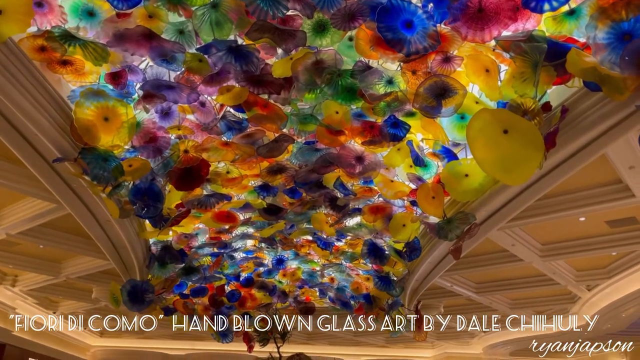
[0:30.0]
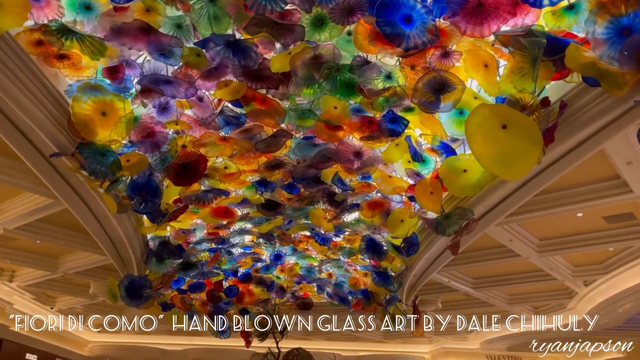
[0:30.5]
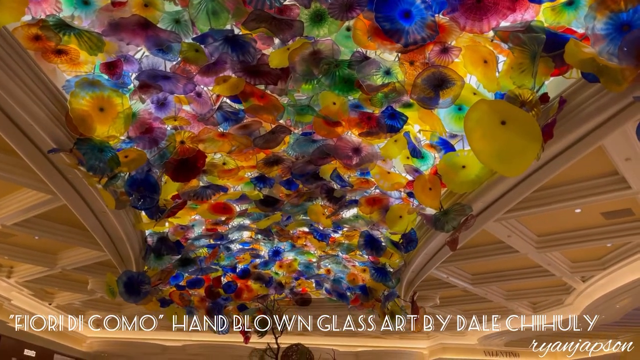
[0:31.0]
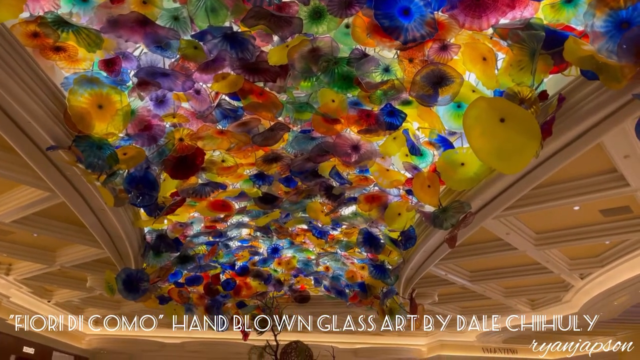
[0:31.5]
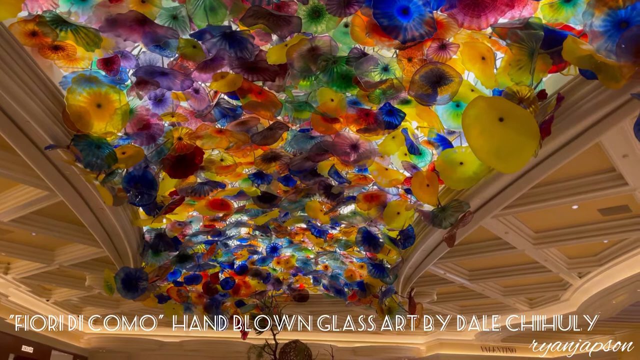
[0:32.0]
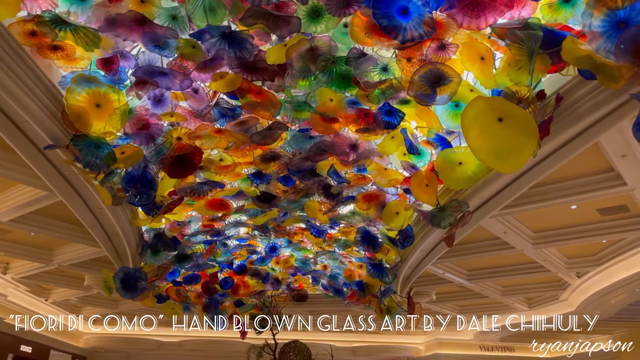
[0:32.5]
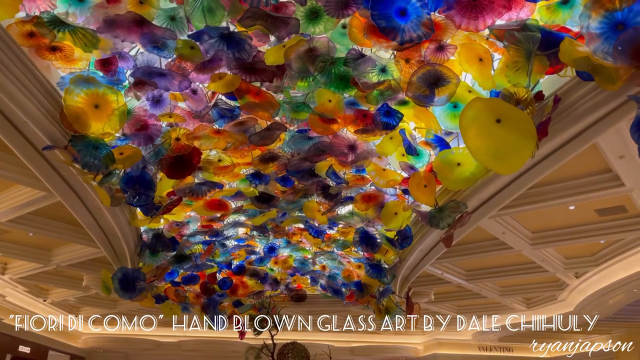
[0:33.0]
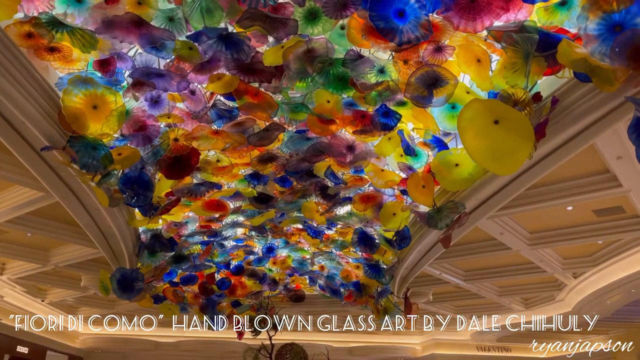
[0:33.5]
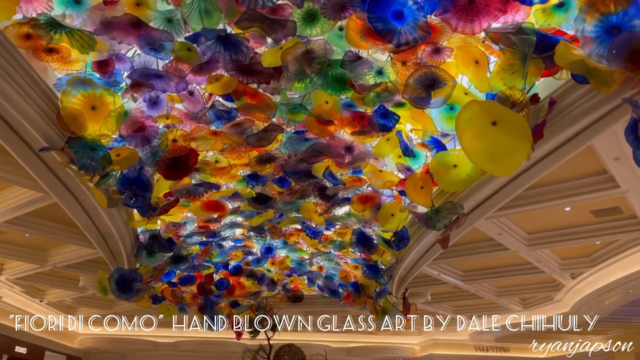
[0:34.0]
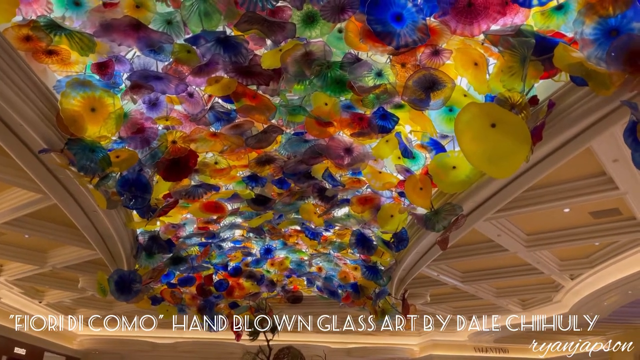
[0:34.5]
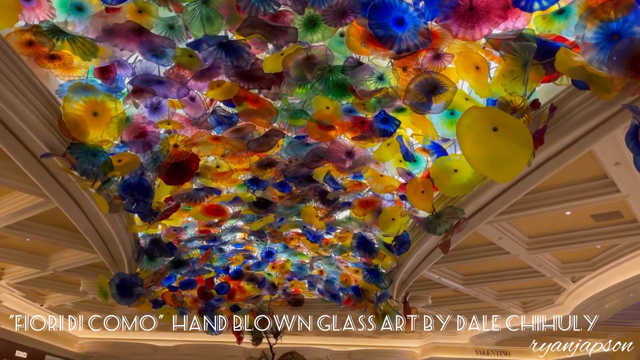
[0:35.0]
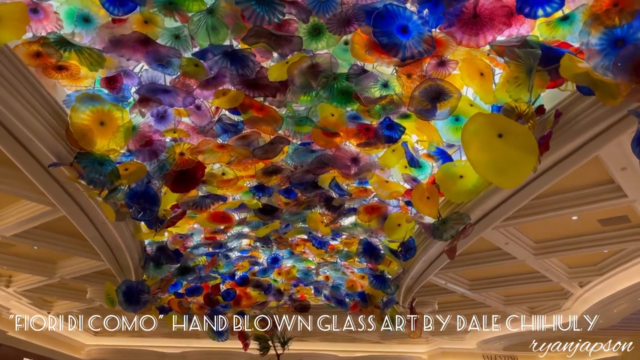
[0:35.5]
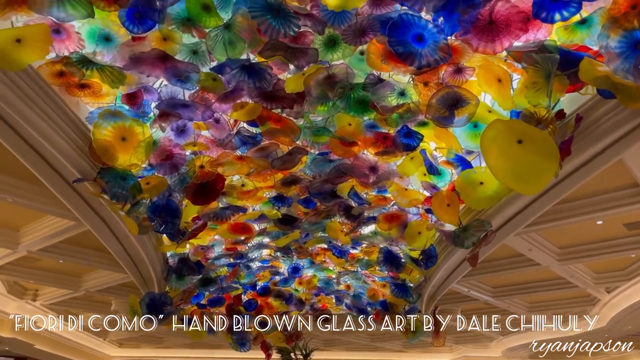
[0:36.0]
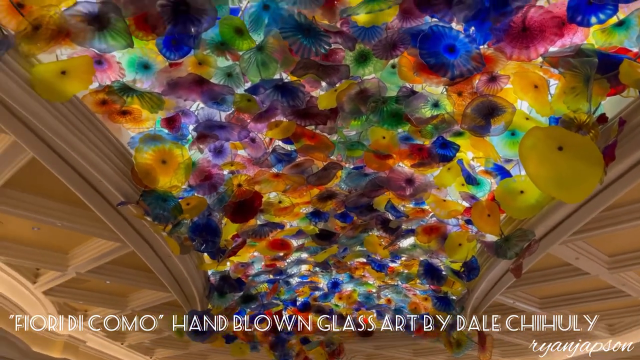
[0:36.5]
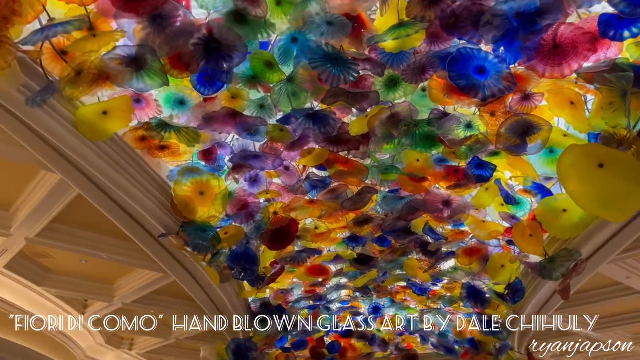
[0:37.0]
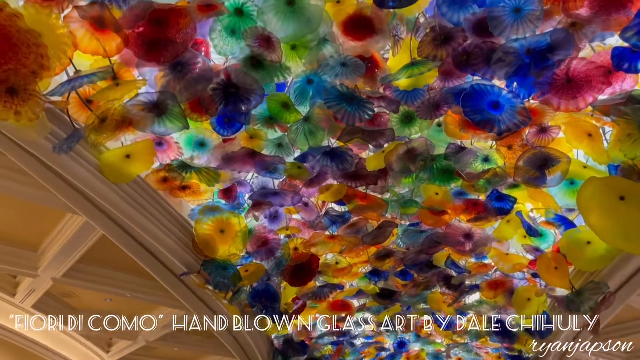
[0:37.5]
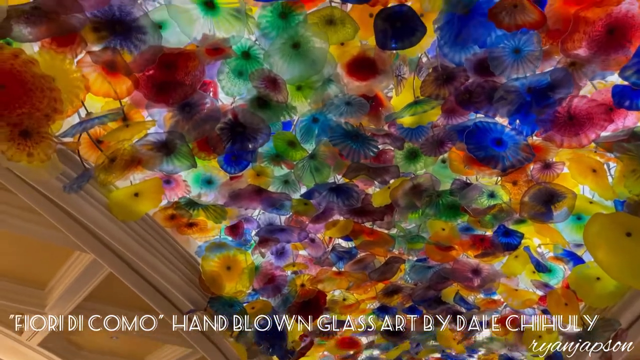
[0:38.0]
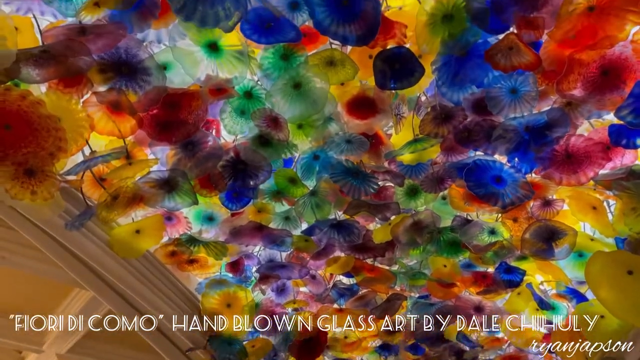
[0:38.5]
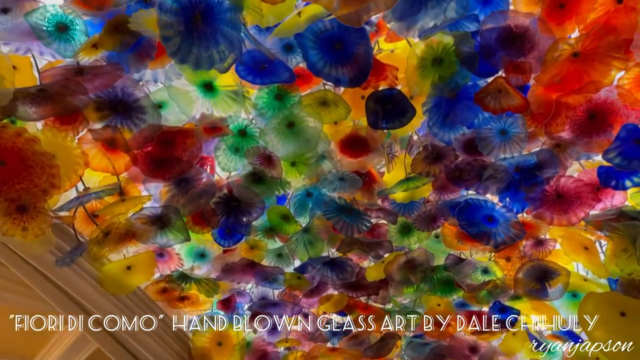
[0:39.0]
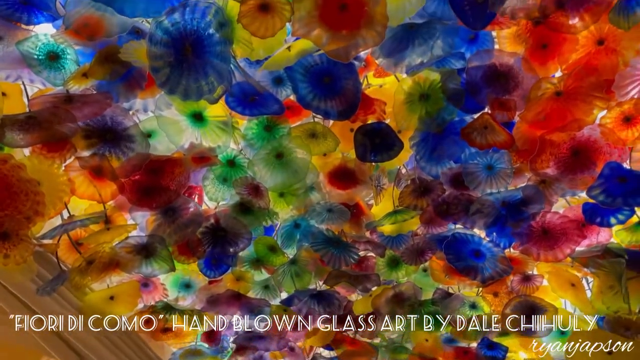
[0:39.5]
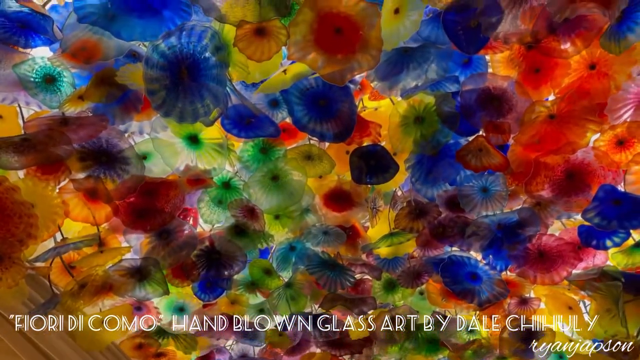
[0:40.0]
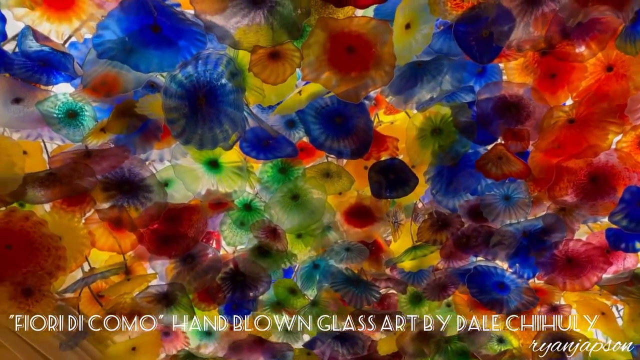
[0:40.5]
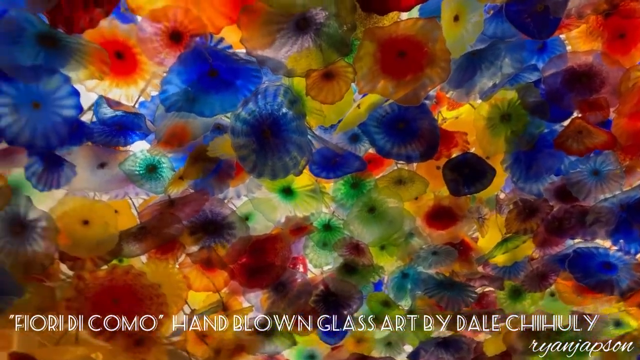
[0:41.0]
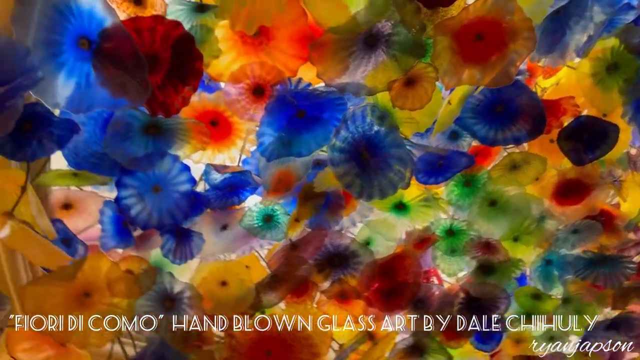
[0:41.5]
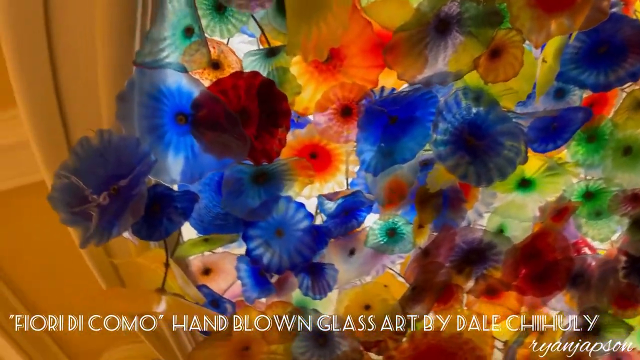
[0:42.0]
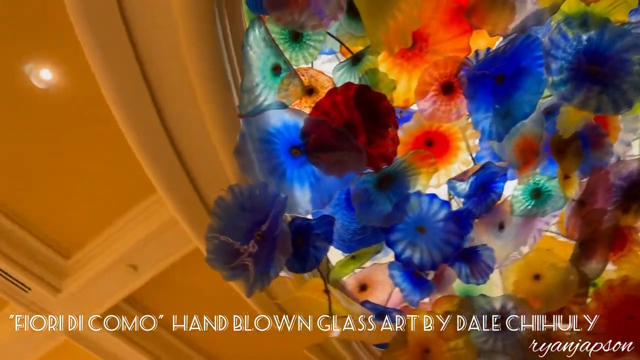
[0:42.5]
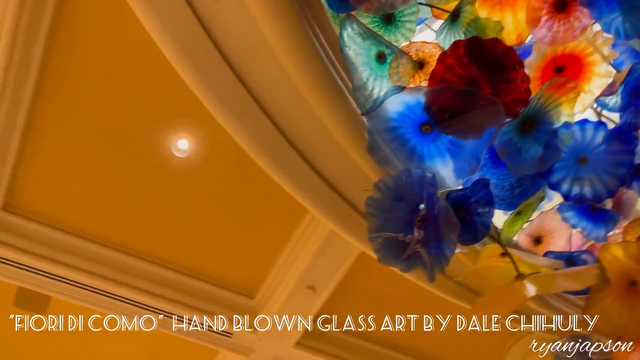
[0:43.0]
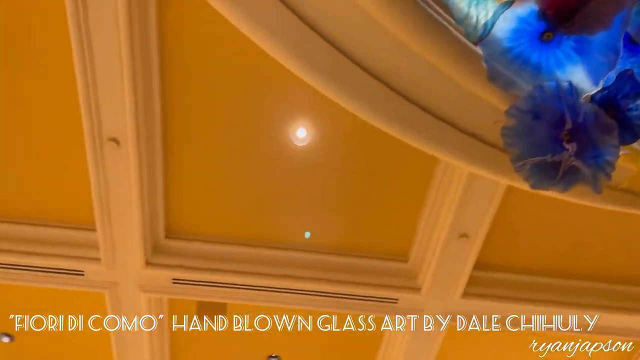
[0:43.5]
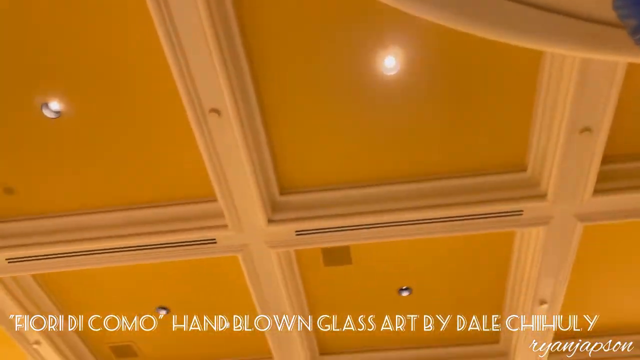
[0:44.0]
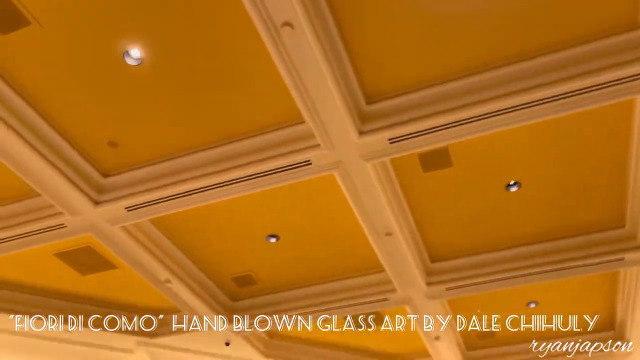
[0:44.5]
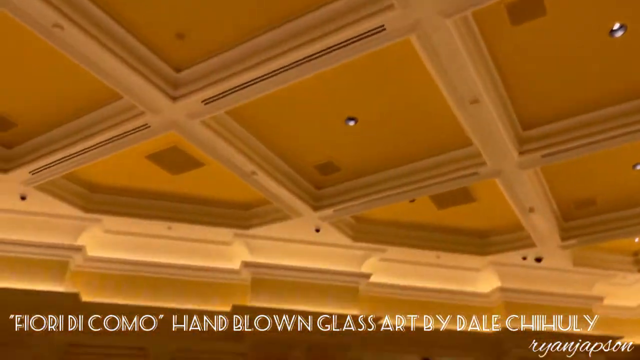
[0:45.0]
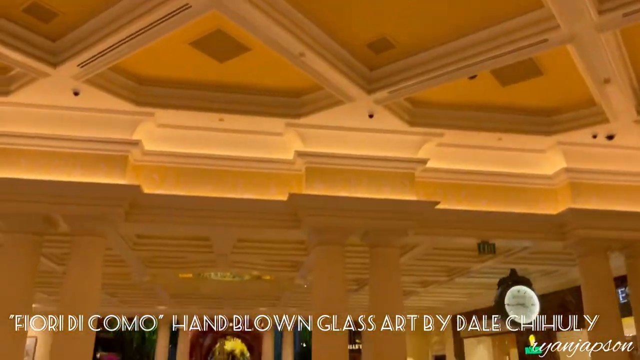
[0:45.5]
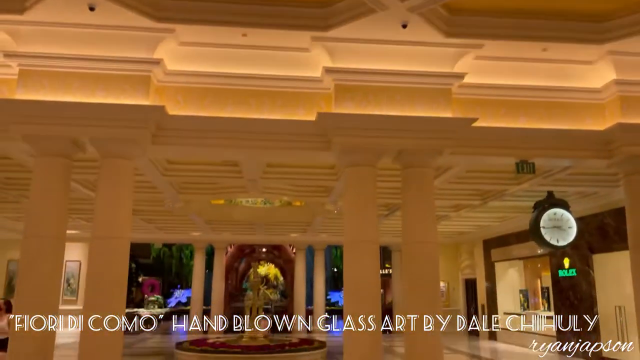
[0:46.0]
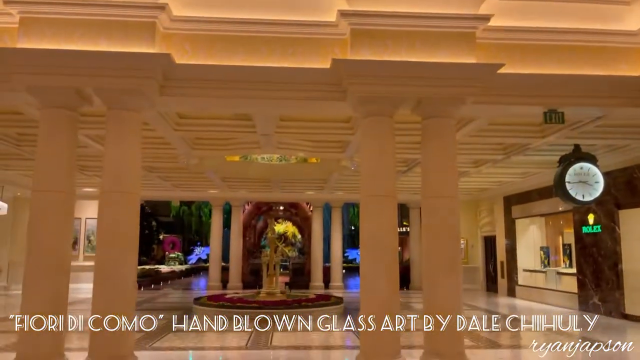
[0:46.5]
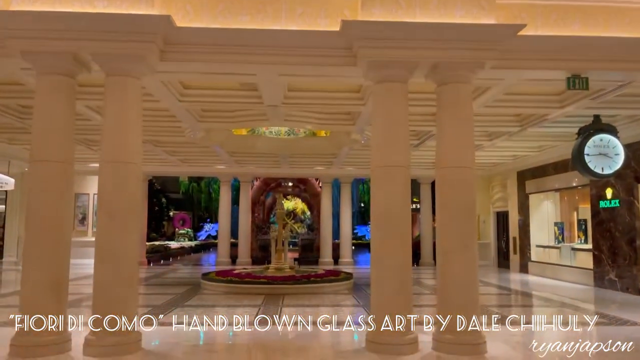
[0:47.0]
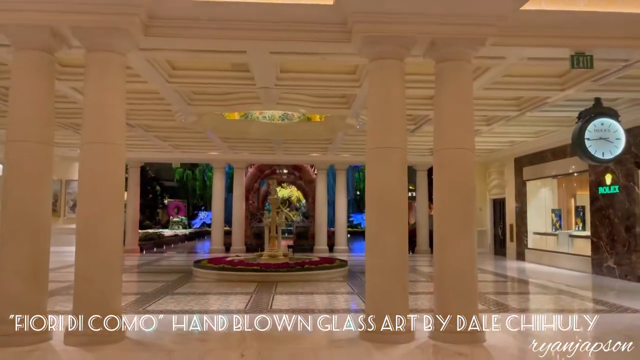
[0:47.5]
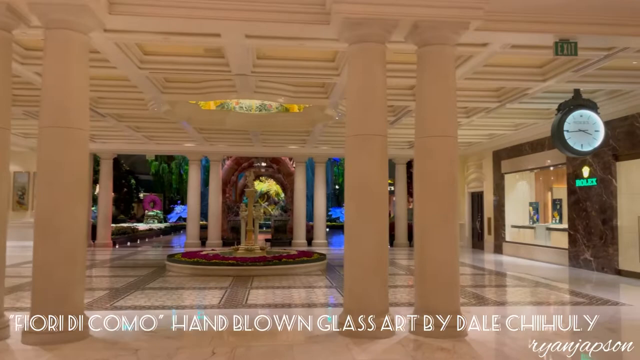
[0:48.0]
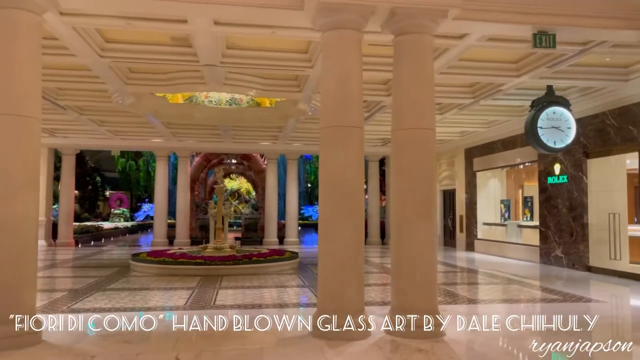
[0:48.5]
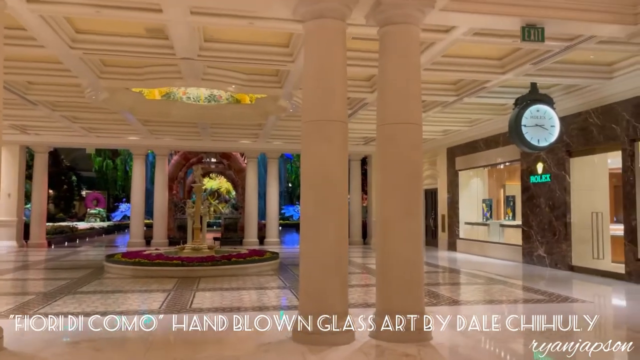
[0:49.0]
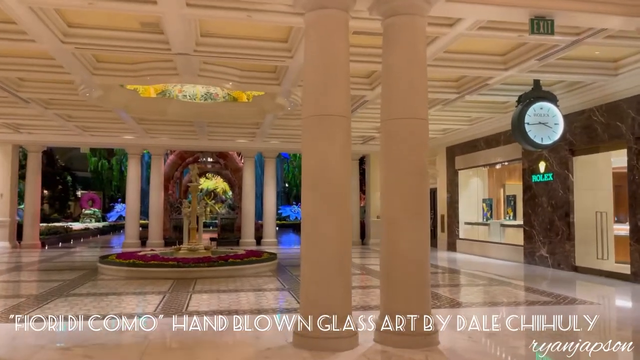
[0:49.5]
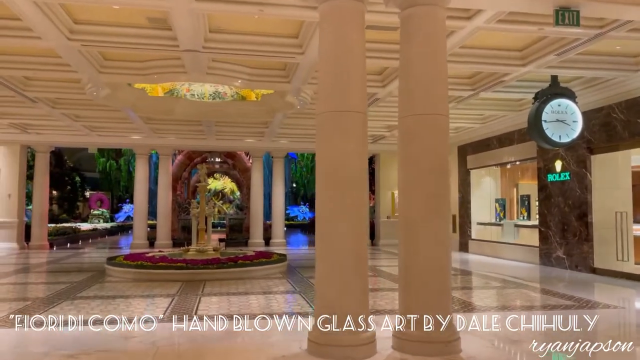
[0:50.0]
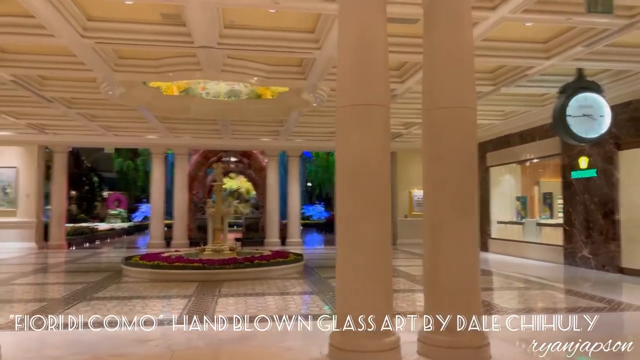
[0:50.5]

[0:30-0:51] The view shows what looks like a ceiling. Molding makes a design coming from the middle of the picture and going down through it, and the surface almost looks oblong. The camera pans down and it is clearly the ceiling, with molding forming X shapes and very decorative figurines coming down and extending across. The camera then pans down to look through the room. A fountain or a statue is in the far center of the picture. A clock is on the right-hand side, in an area that is a tannish golden color. The clock is round and juts out from the side of the wall, and underneath it is a light with some green lighting. Continuing down, there is an inset window; in it are two paintings or two colored rectangles, objects set back.